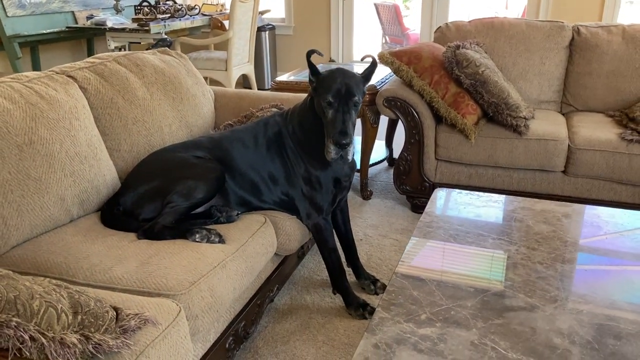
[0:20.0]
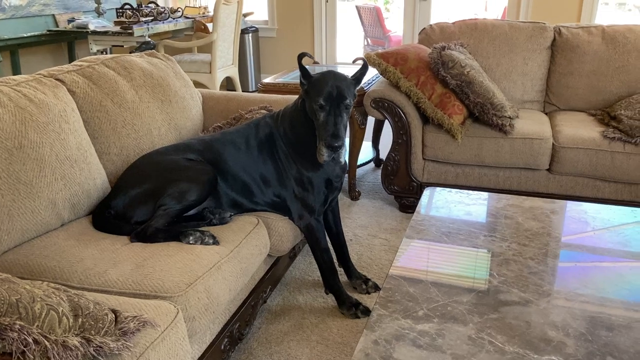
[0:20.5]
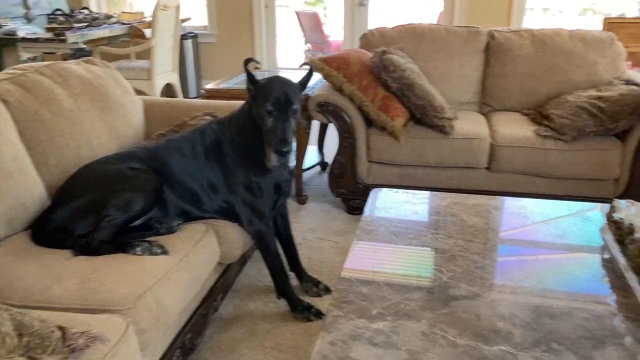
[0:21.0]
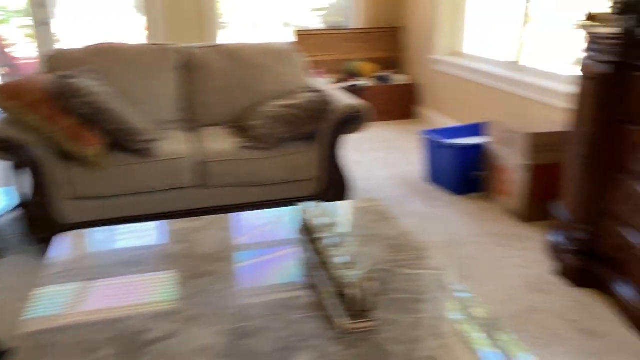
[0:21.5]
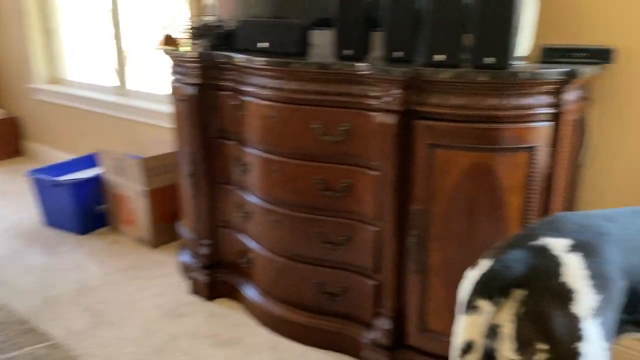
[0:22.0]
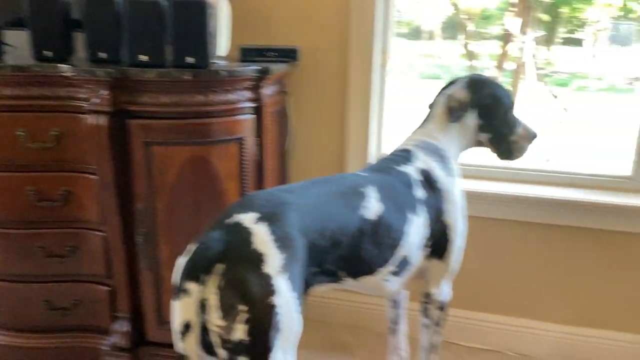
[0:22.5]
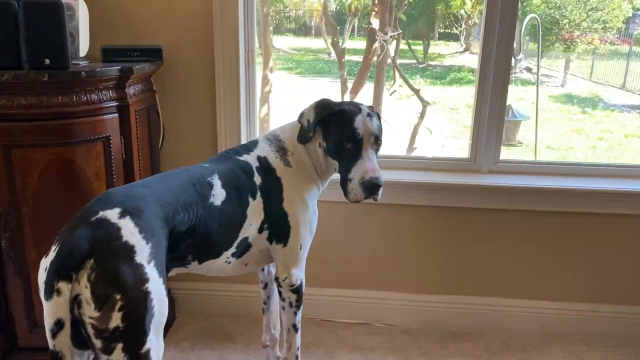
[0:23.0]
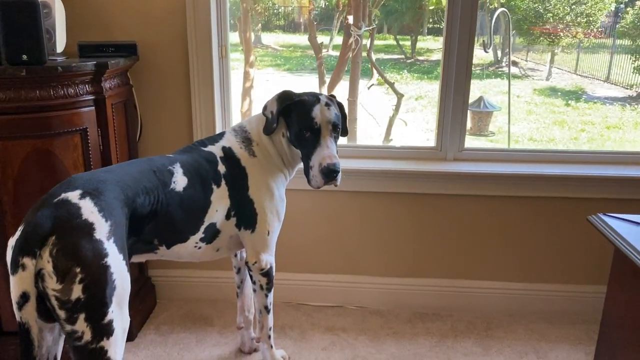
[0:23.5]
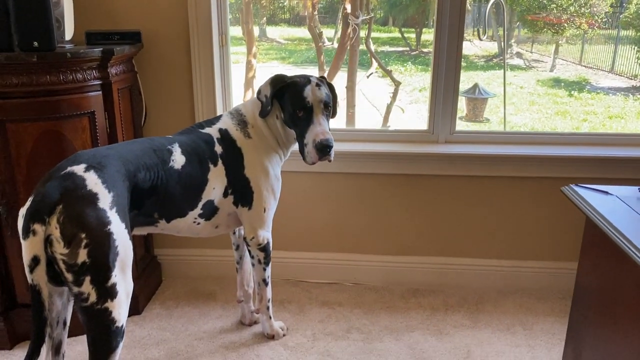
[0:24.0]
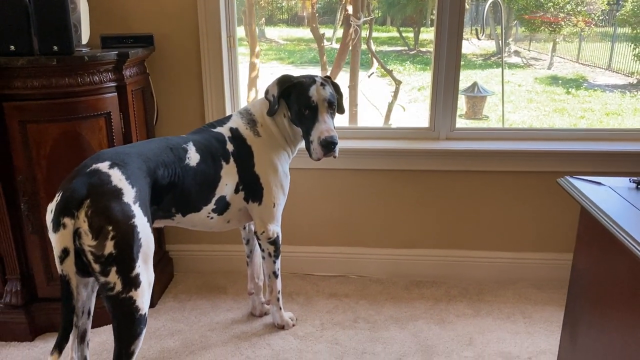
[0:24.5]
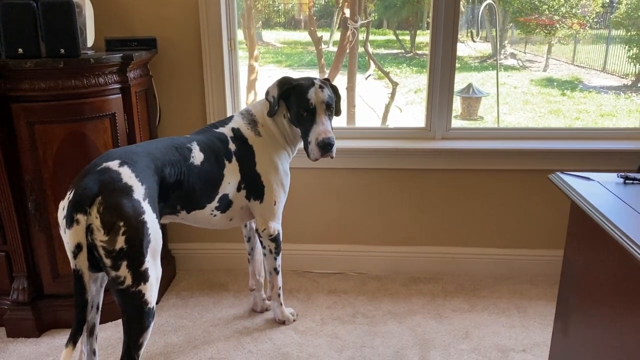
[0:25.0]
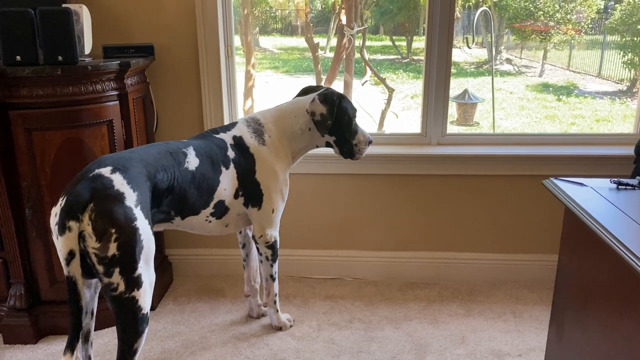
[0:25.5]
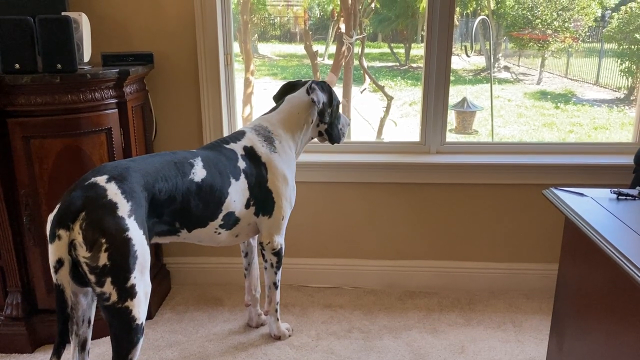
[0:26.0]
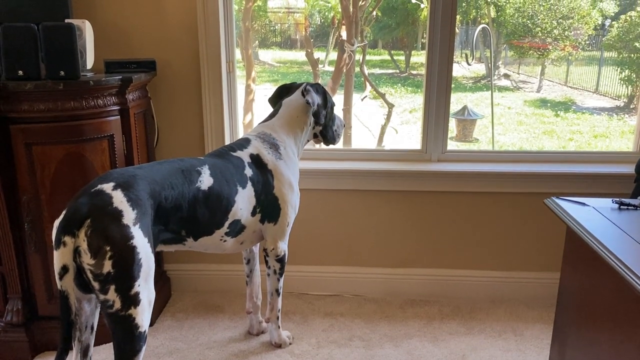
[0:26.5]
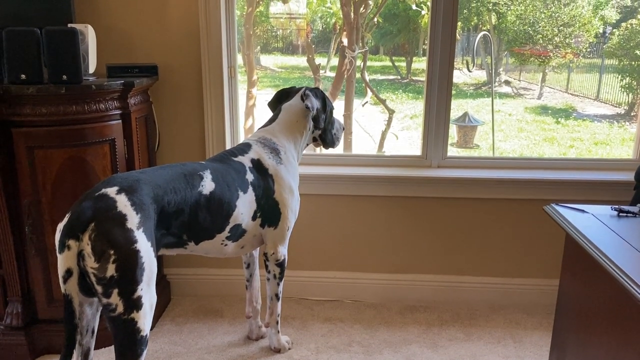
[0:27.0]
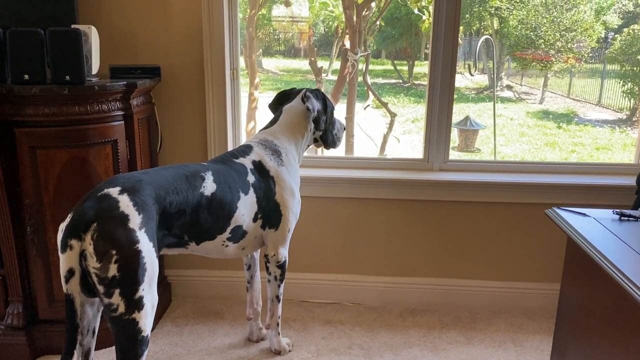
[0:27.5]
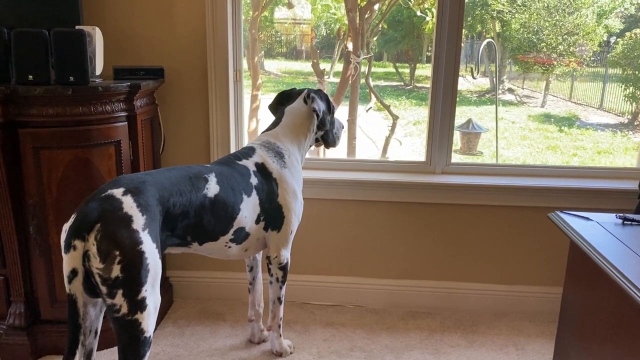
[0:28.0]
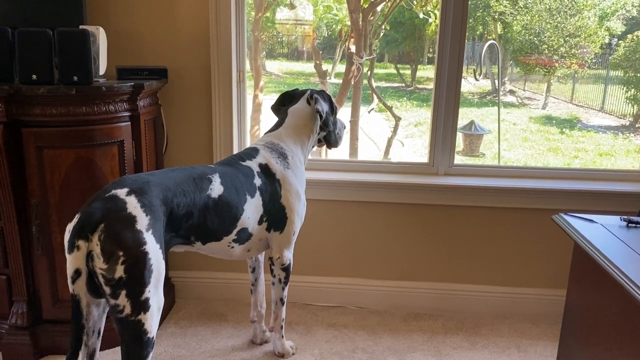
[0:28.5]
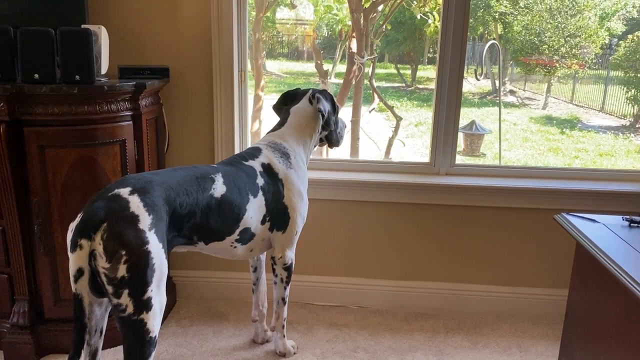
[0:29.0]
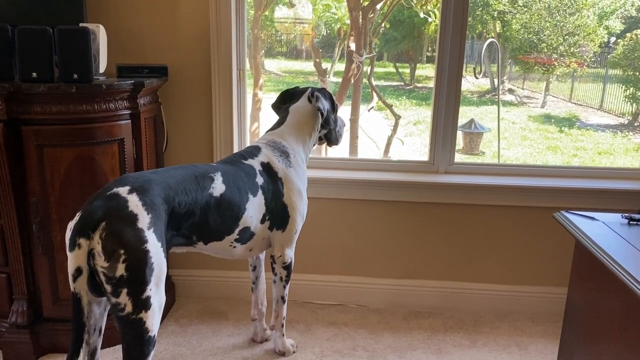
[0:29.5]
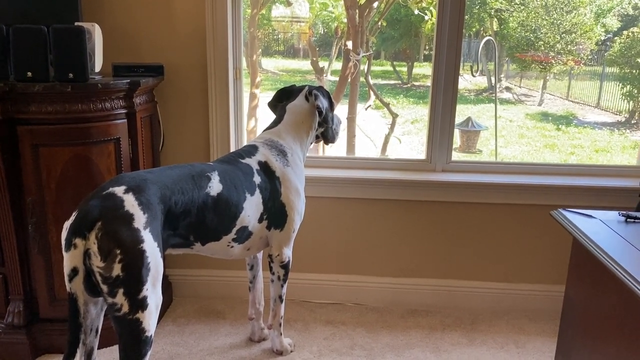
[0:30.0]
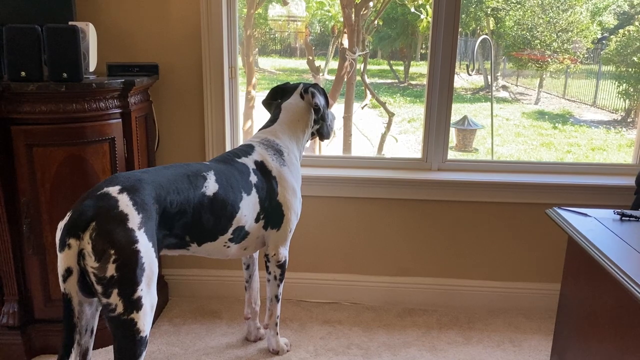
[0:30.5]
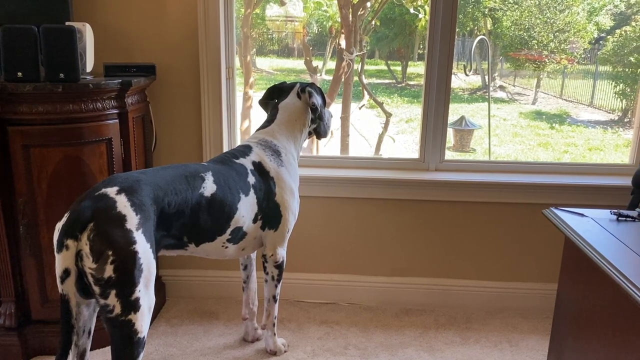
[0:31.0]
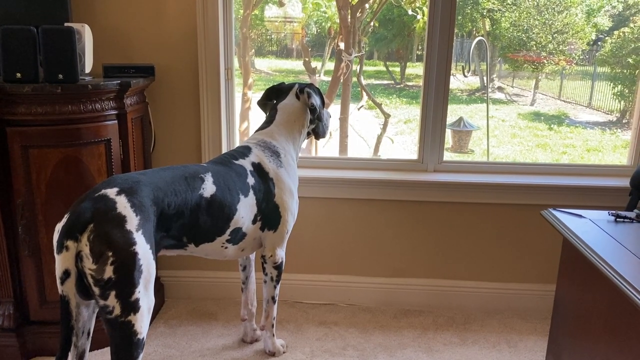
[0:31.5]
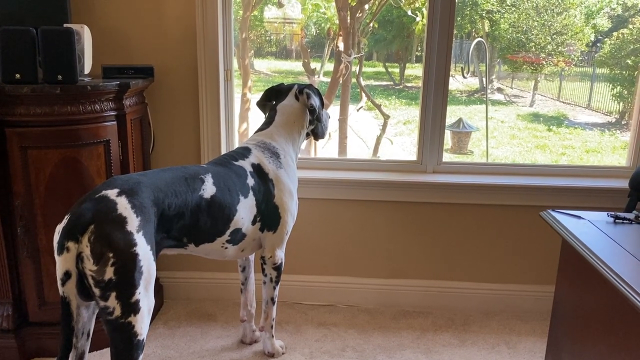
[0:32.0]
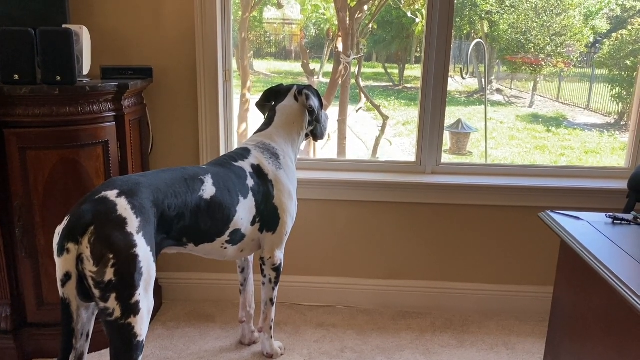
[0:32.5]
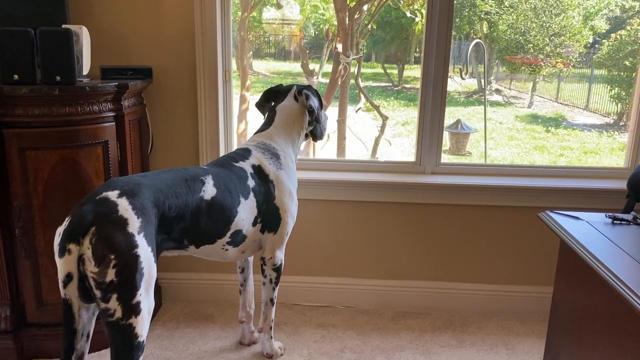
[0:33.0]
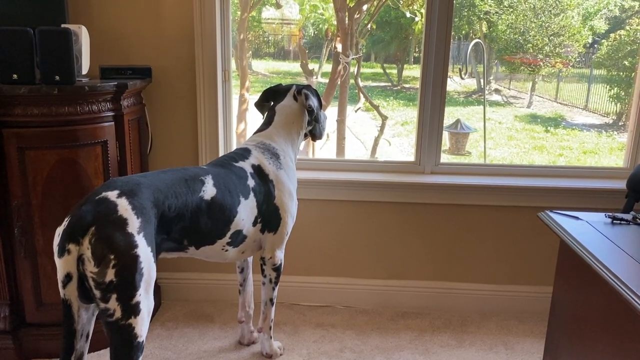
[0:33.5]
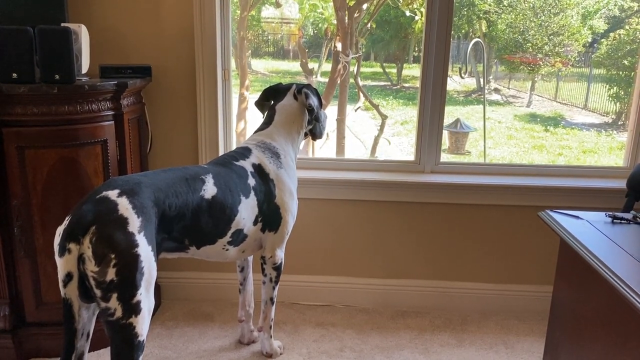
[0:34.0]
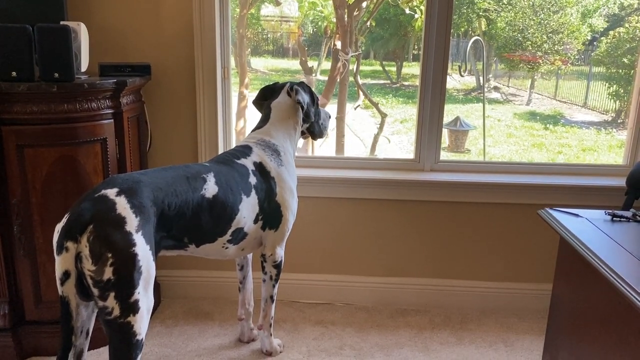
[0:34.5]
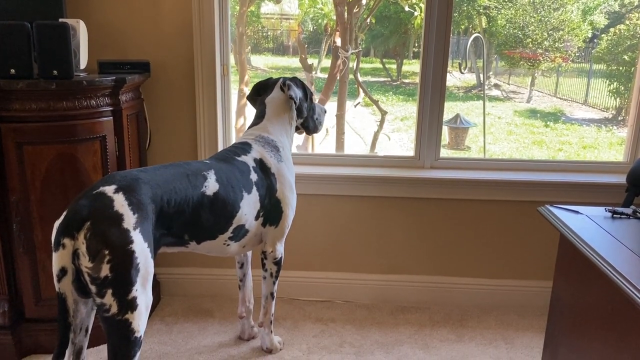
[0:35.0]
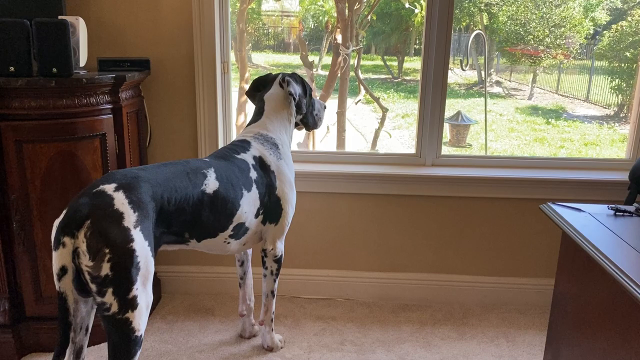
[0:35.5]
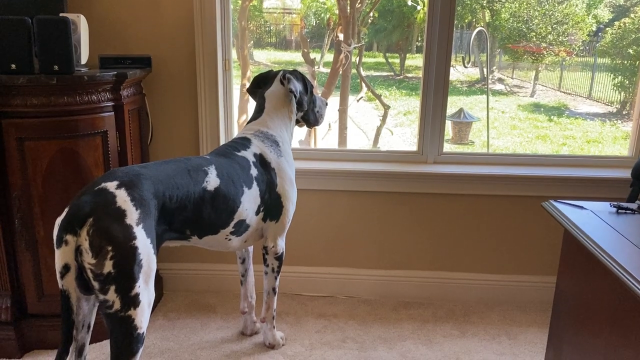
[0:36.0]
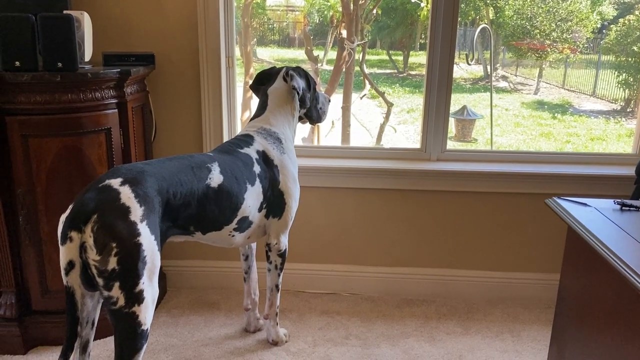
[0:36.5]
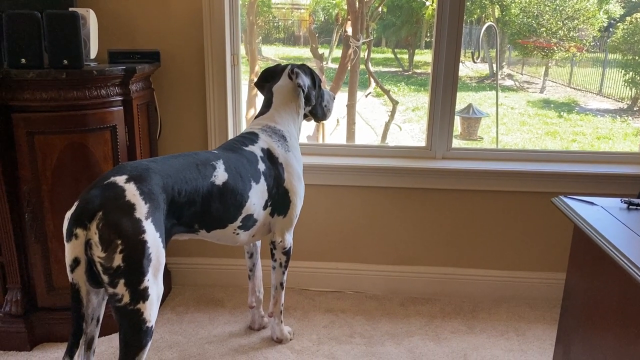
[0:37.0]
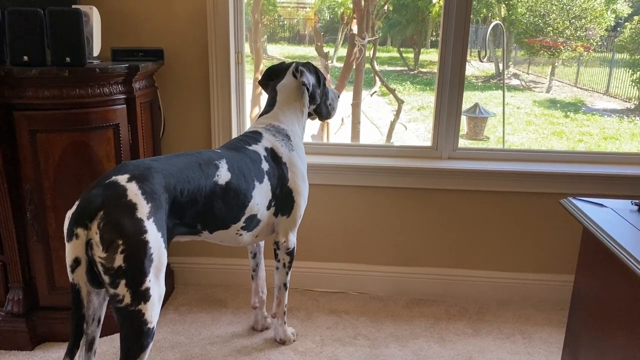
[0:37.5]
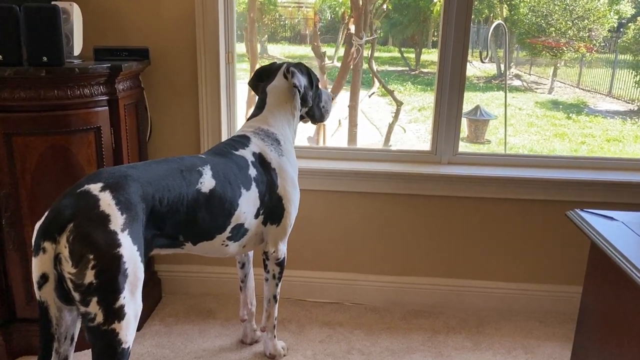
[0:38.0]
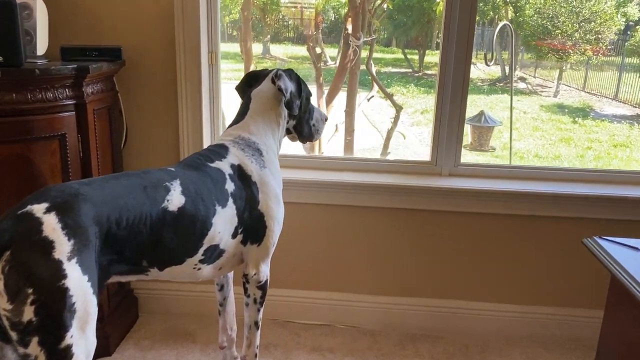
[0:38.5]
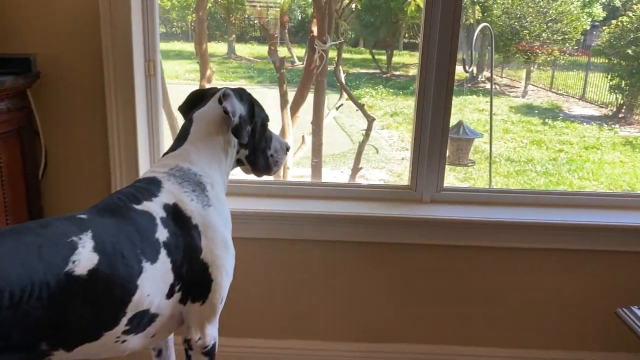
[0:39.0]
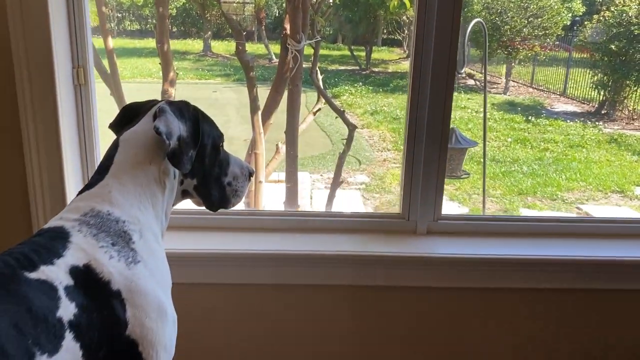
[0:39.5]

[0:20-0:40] The person recording shifts the camera across the room to show the other dog, which seems to be a Great Dane but does not have its ears docked like the black dog. The black and white dog is peering out of the window into the backyard of the home. The yard is fenced in and there is a bird feeder outside the window. The dog looks back at the person recording and stares for a moment before looking back outside. The trees outside are slightly moving in the wind. It is a sunny day, and there are shadows from the trees in the yard. The dog seems to have spotted something outside, and the person recording moves closer, revealing small concrete stepping stones in the yard outside the window.